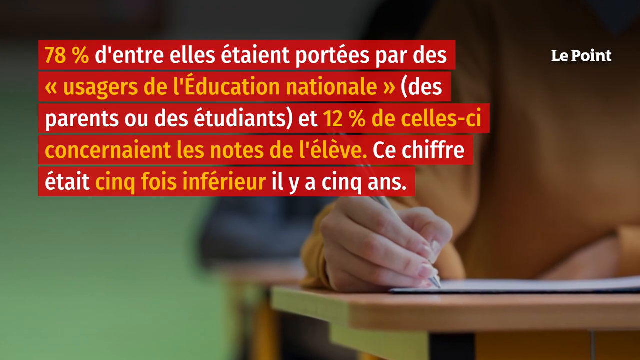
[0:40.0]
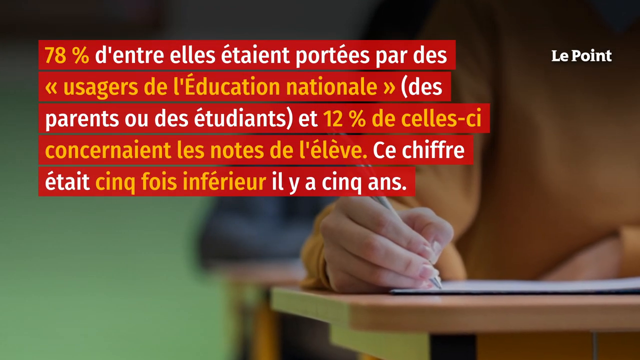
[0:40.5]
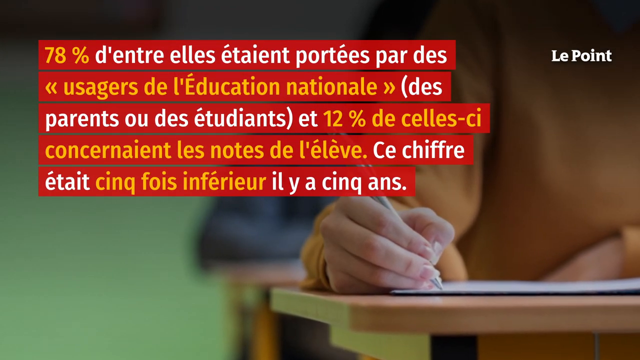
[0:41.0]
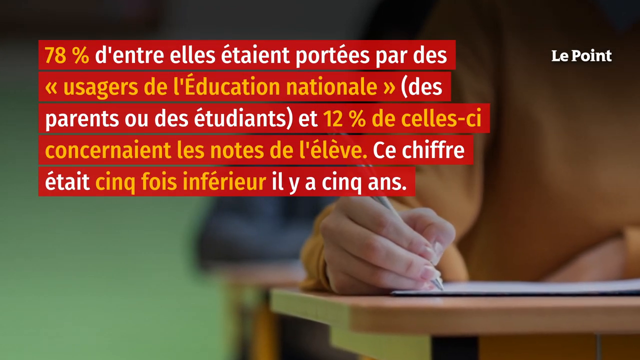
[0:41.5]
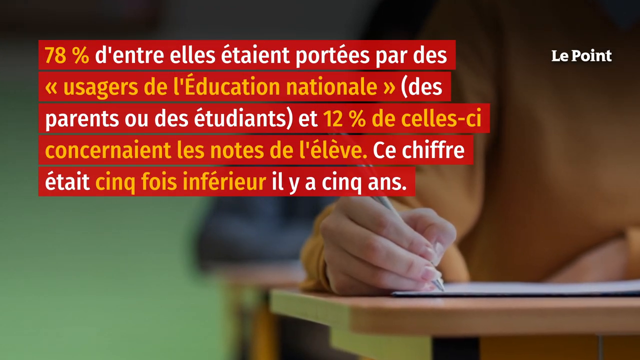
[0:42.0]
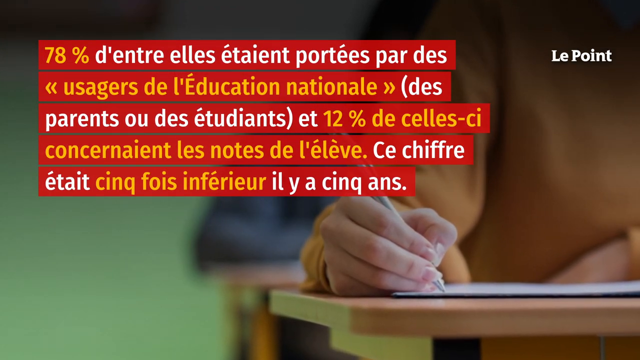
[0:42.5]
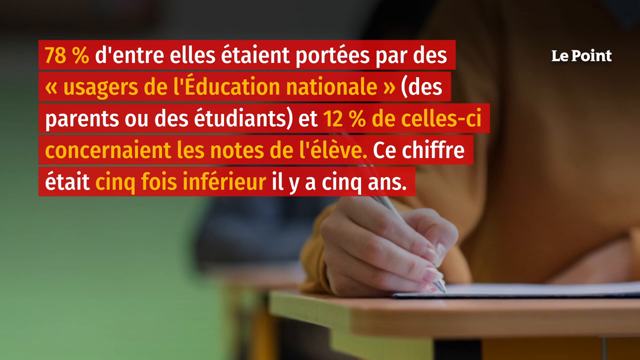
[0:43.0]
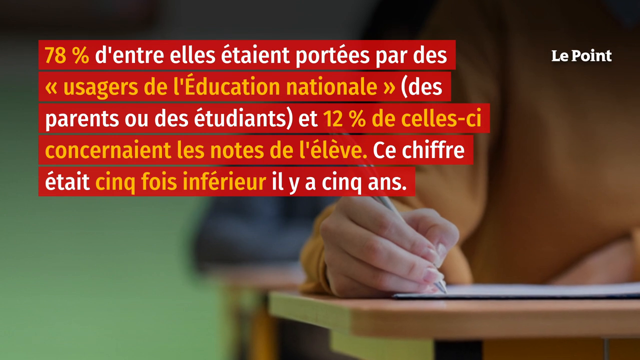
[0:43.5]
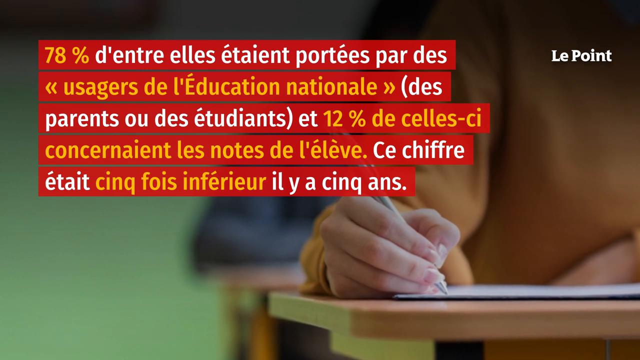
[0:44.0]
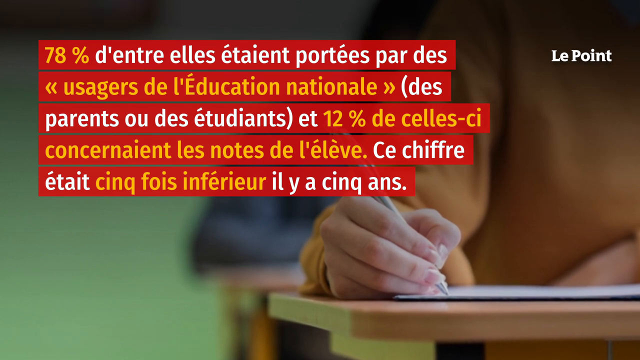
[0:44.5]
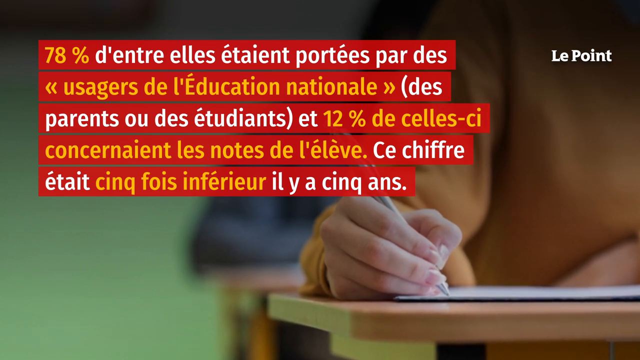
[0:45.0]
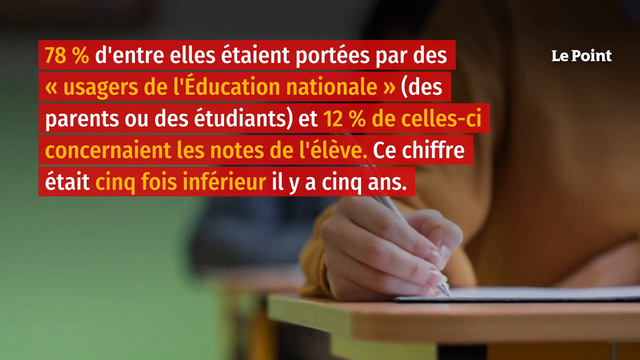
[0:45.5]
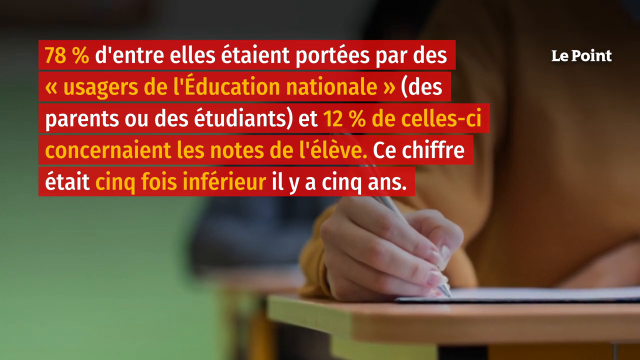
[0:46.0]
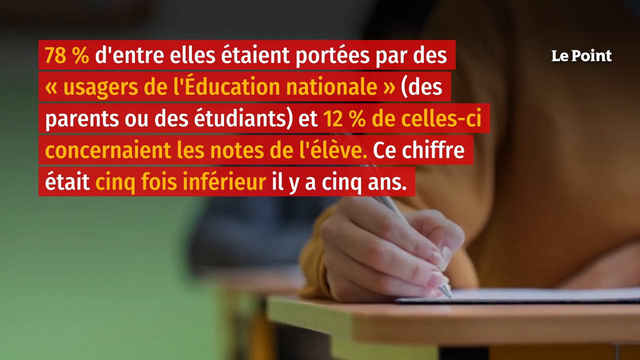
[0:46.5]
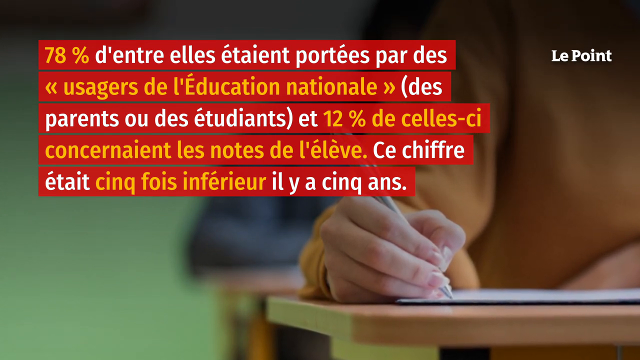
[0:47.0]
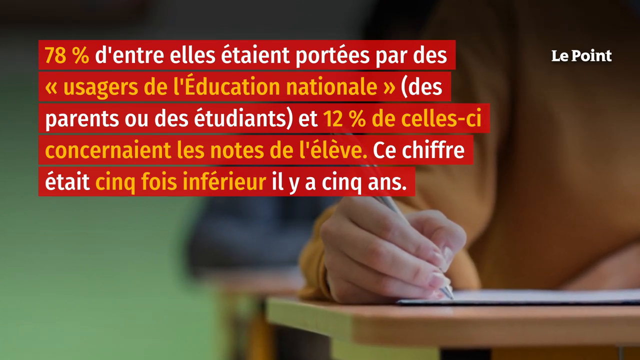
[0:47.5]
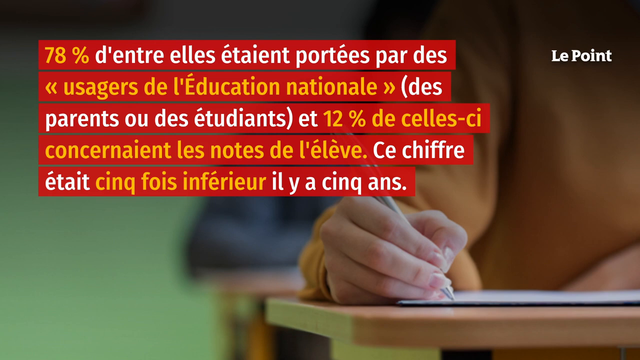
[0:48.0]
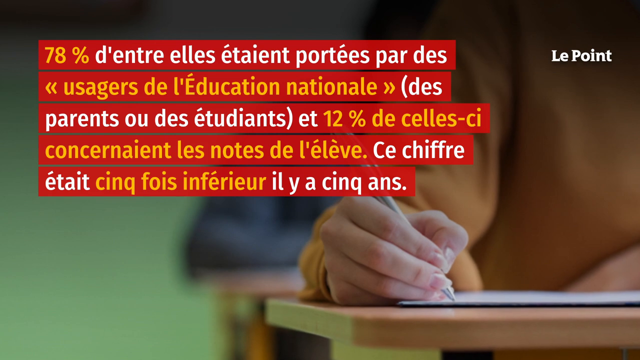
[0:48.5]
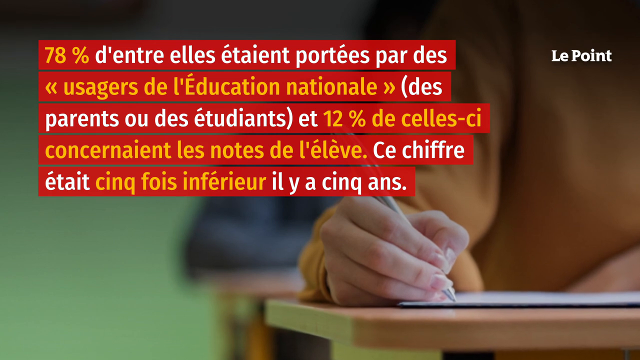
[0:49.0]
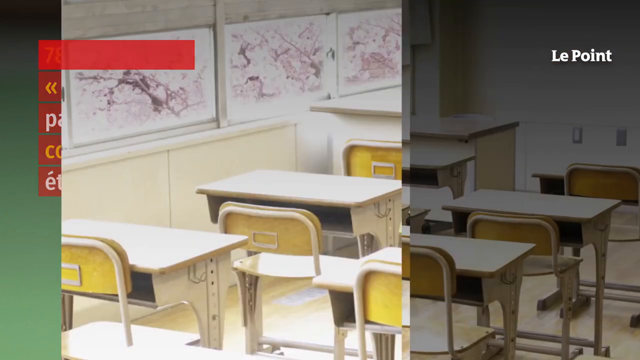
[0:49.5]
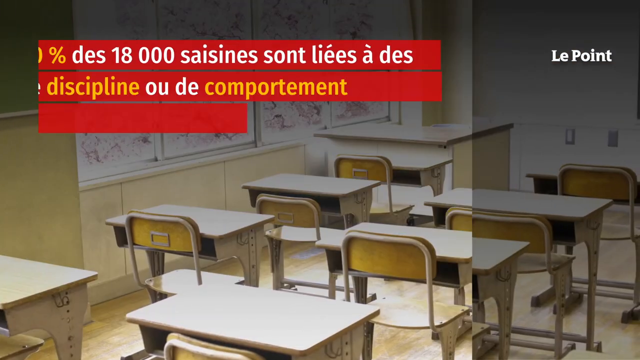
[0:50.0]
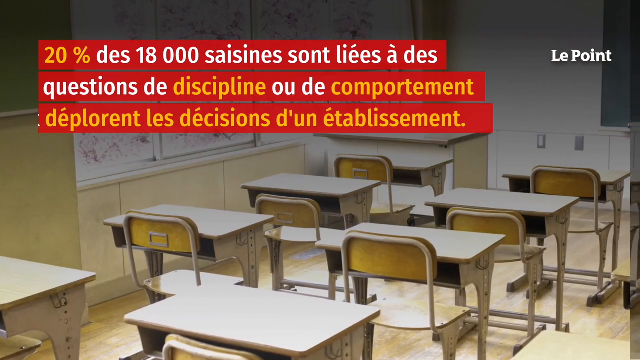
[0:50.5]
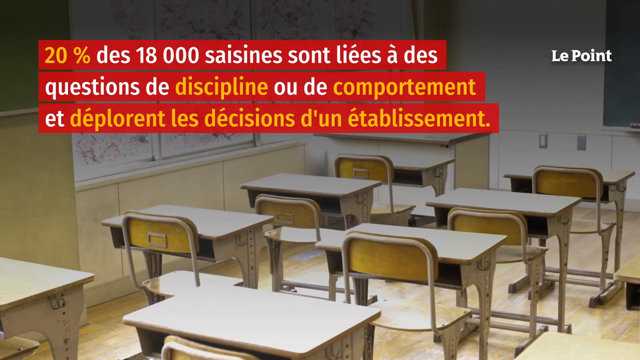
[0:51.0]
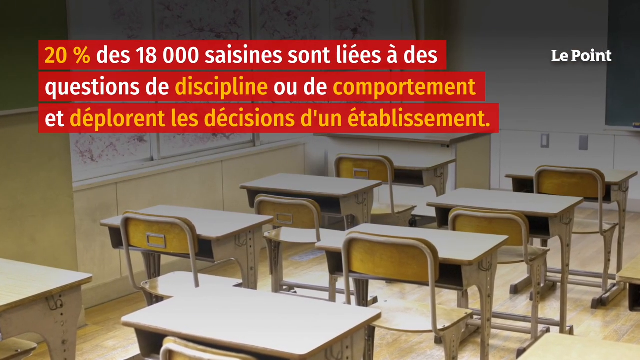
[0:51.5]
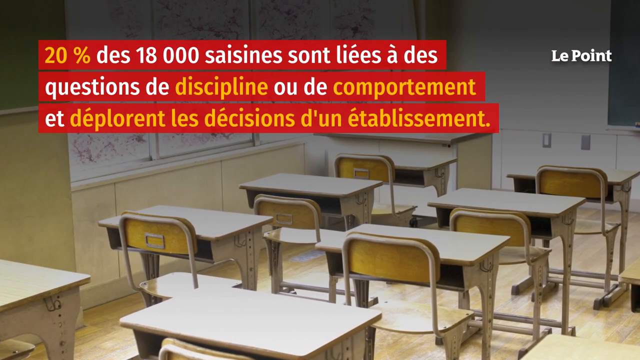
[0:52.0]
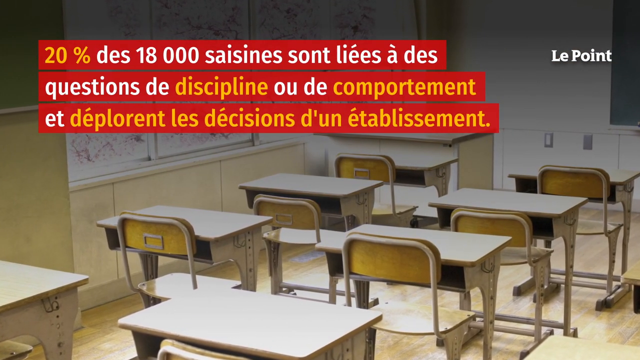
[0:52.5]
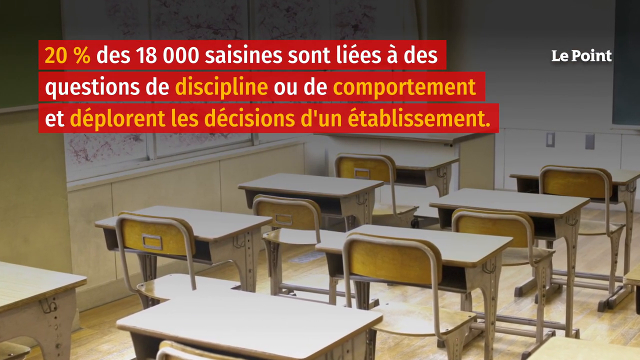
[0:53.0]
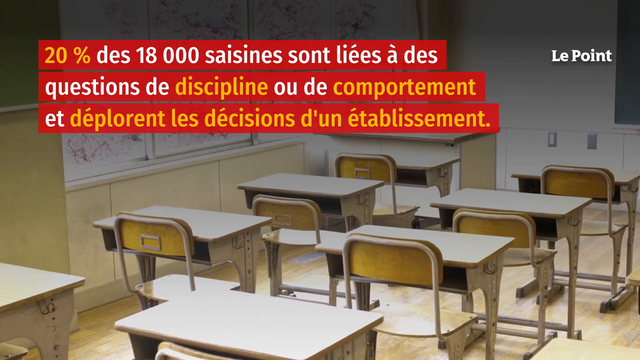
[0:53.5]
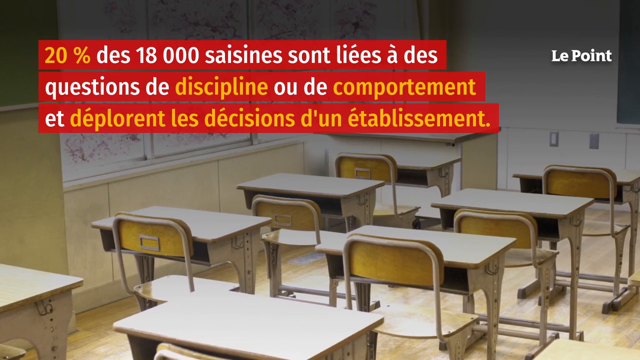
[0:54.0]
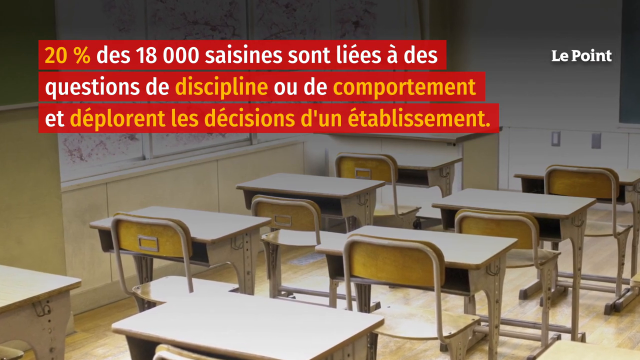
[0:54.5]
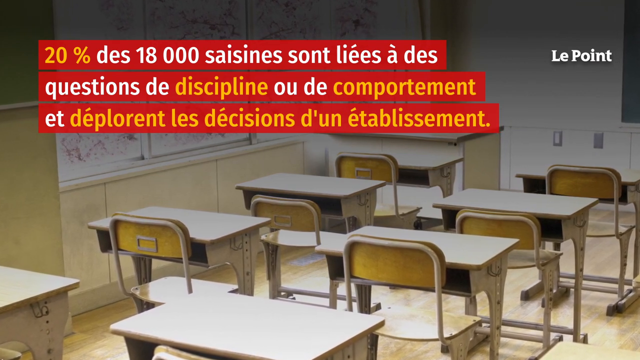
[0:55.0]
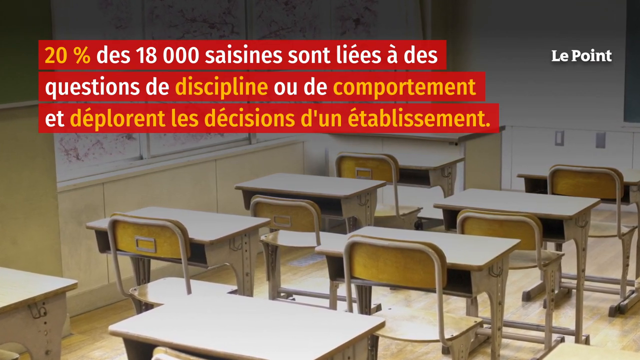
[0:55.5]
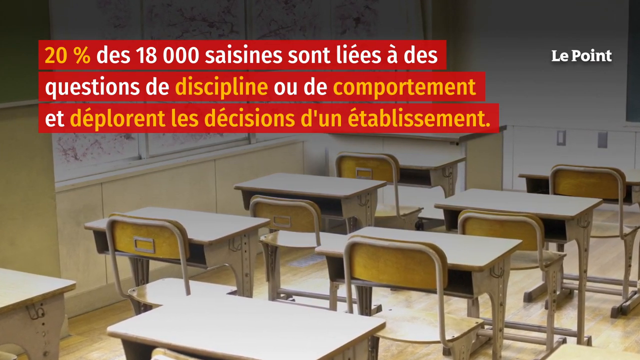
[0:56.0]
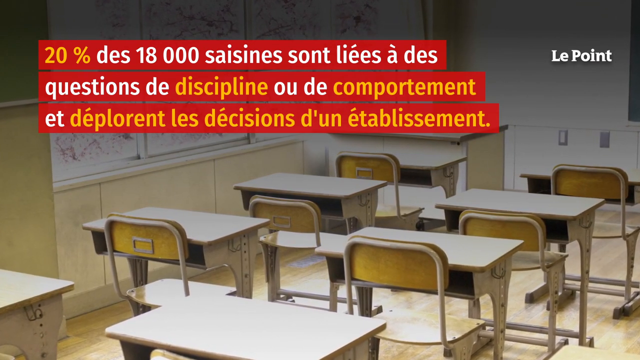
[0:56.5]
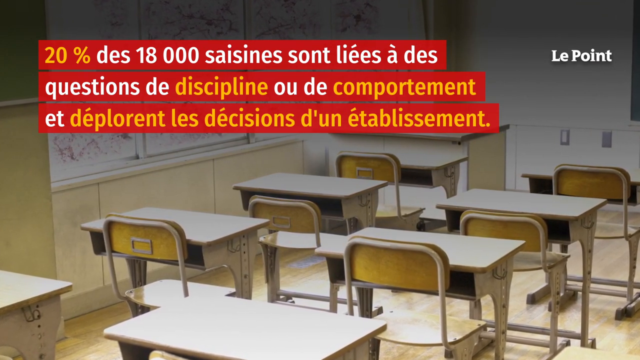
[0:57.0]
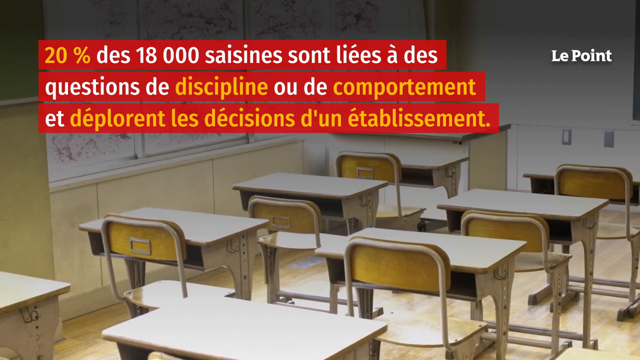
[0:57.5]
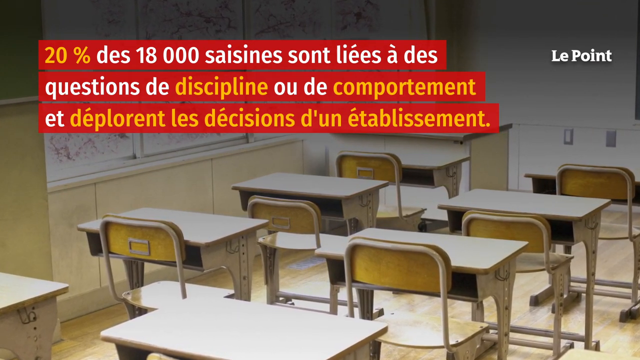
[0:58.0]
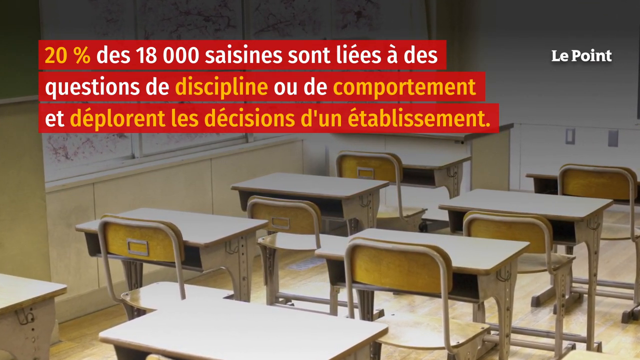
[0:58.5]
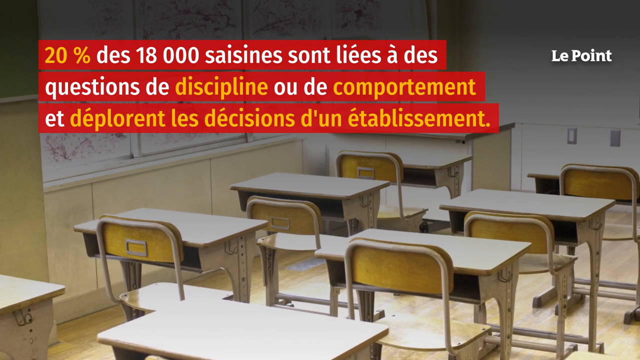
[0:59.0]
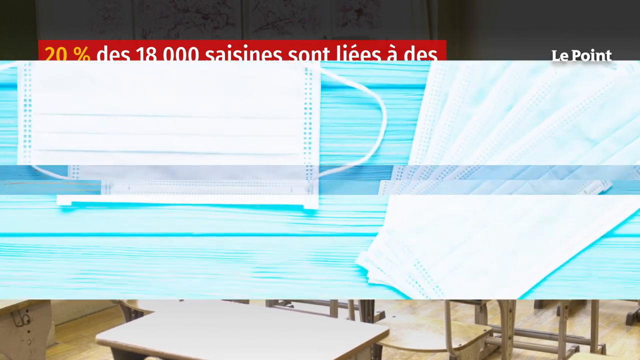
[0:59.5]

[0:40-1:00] Two students sit at a desk, but only one of them is not blurry. That person's face is not visible; they sit at a light wooden desk holding what looks to be a pen in their hands. They are Caucasian, wear an orange sweater, and an elbow rests on the desk in front of their chest. A block of writing appears on a red banner. The picture is still, so the person is not seen actually writing. The image then switches to two rows of empty desks; most of the desks are metal, but the chair backrests are wood. It looks like an empty classroom. The red banner appears again with text in orange and white: "20%" in orange, a sentence in white, the word "discipline" in orange, further words alternating in white and orange including "et" in white, and a closing sentence in orange. "La Pointe" is still on the screen. The camera again very slowly zooms in on the image before it switches to a new one.